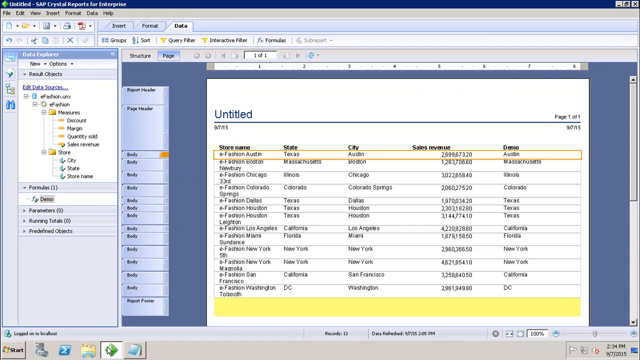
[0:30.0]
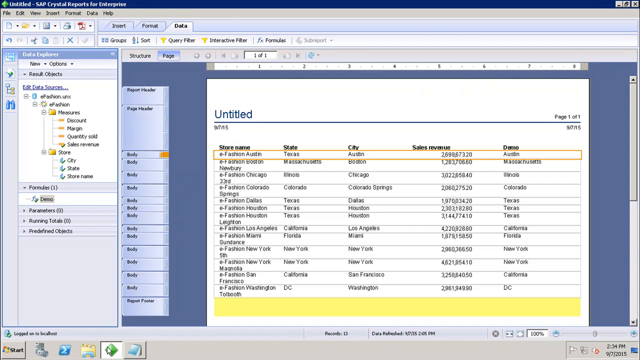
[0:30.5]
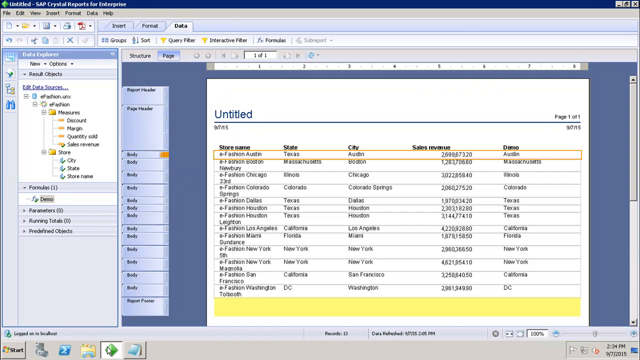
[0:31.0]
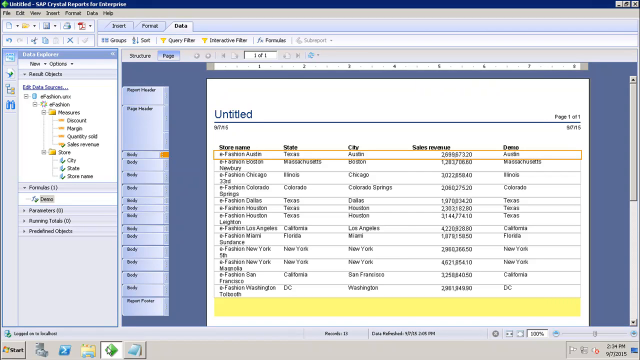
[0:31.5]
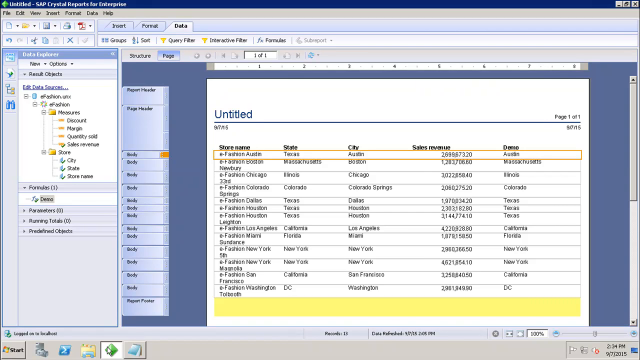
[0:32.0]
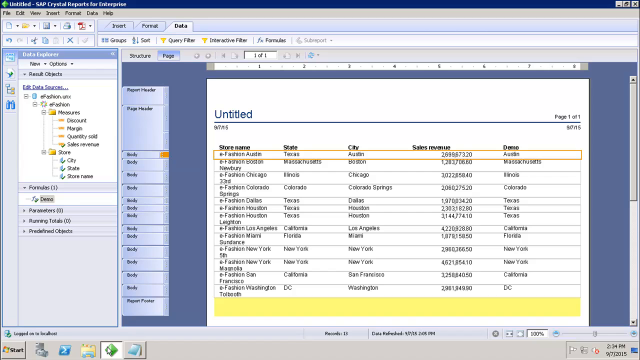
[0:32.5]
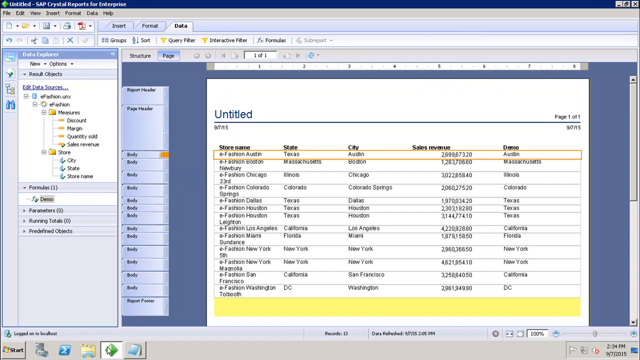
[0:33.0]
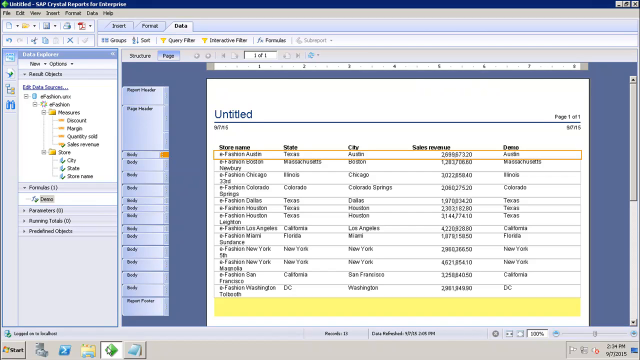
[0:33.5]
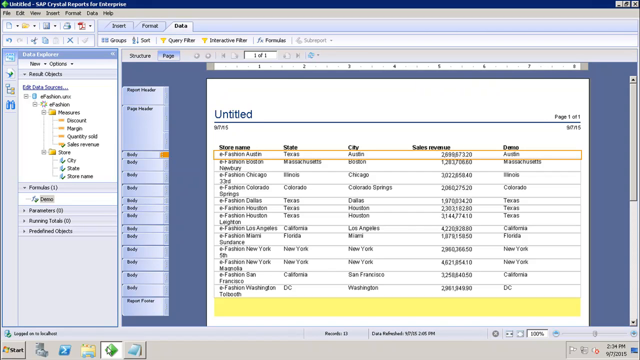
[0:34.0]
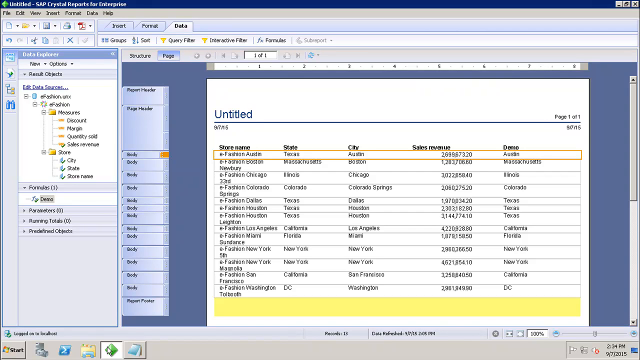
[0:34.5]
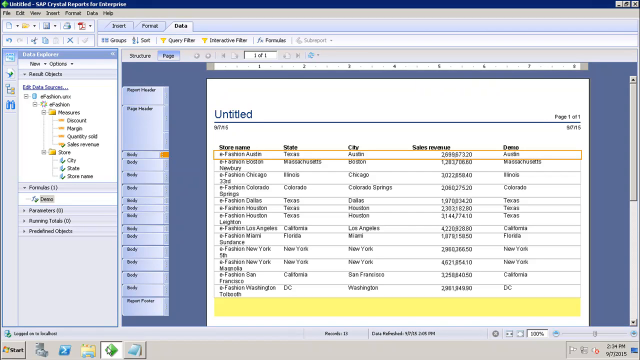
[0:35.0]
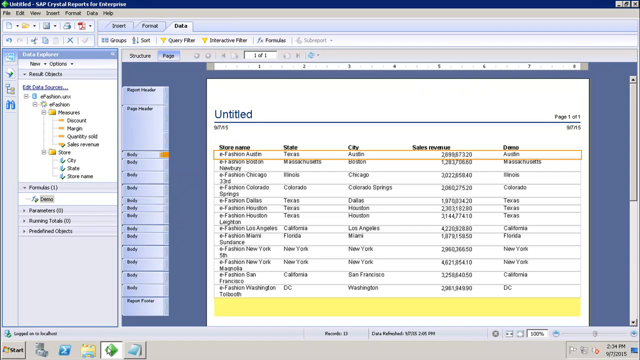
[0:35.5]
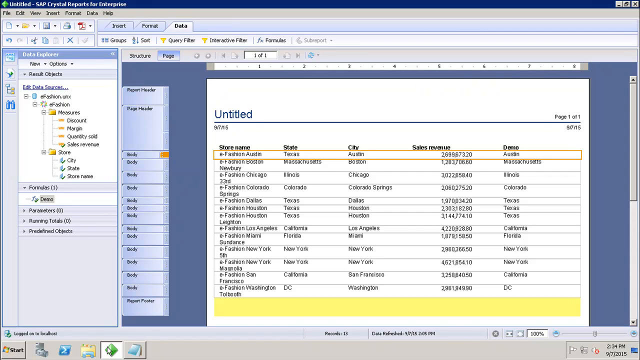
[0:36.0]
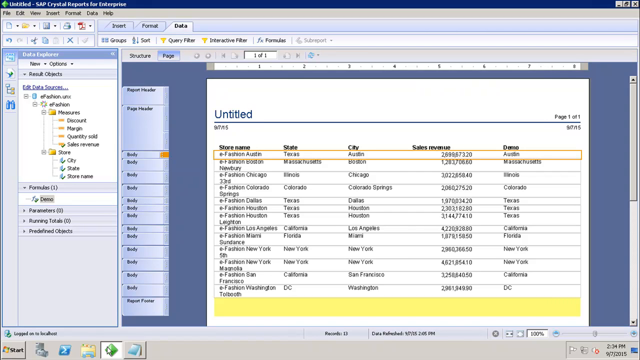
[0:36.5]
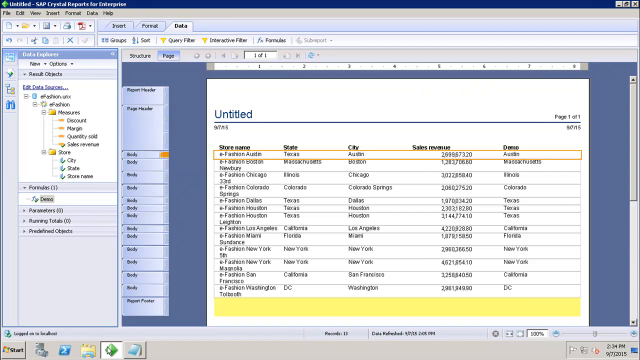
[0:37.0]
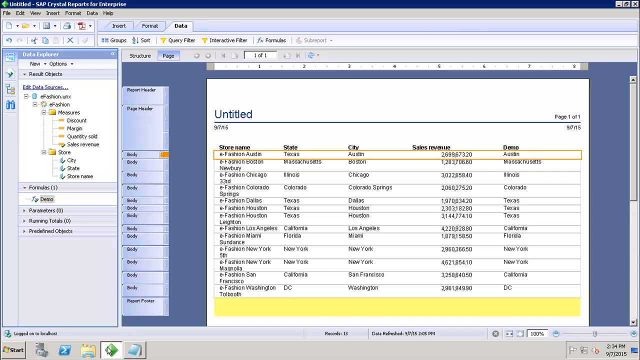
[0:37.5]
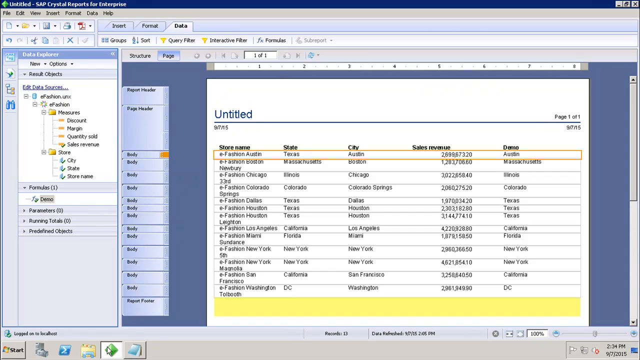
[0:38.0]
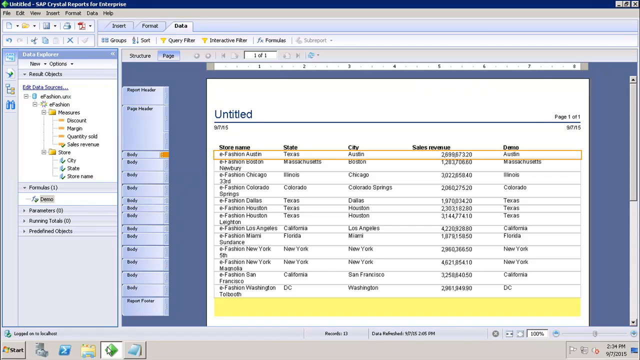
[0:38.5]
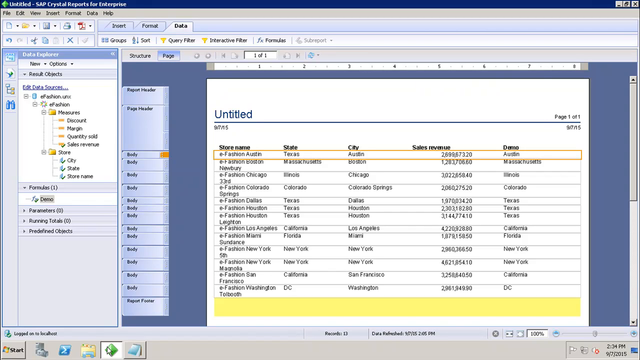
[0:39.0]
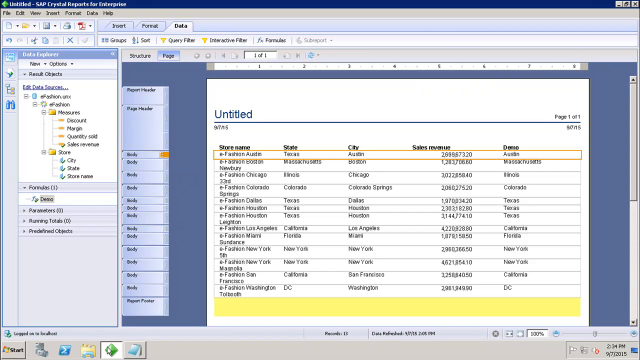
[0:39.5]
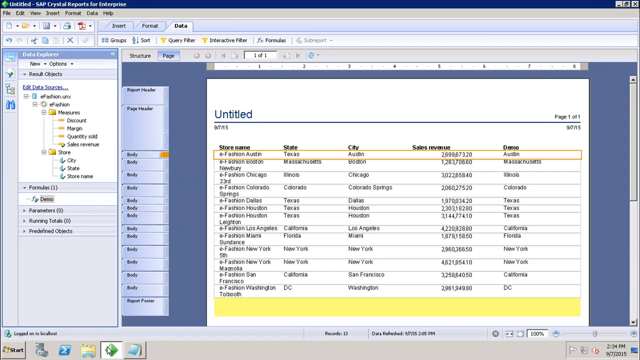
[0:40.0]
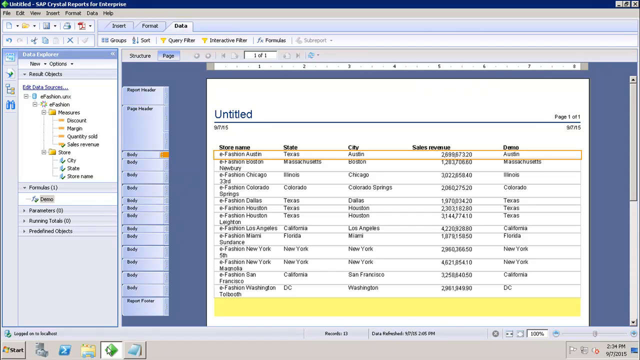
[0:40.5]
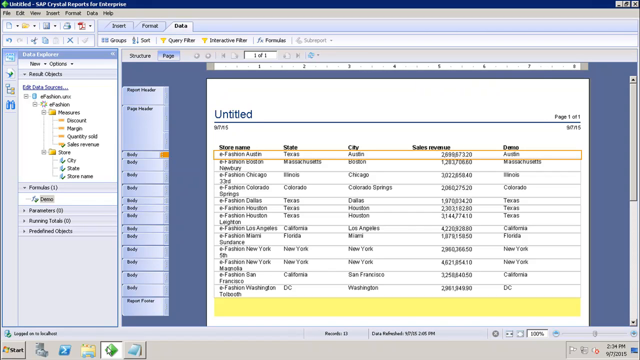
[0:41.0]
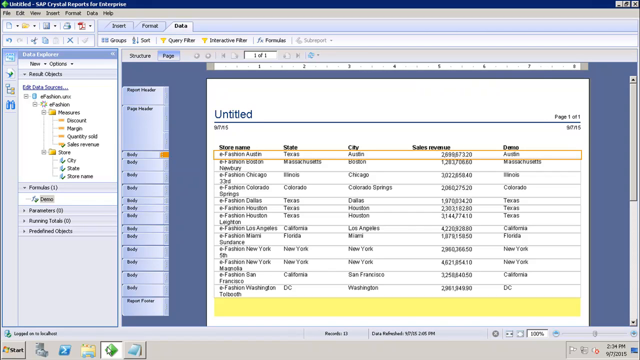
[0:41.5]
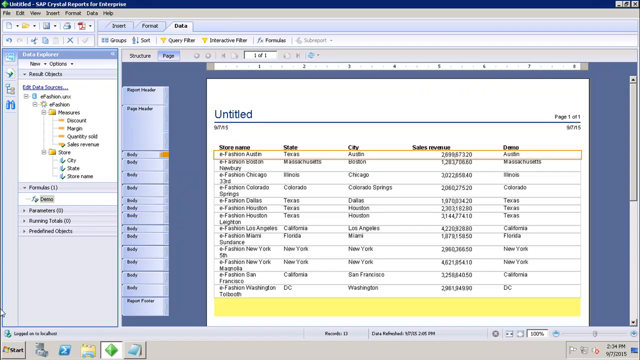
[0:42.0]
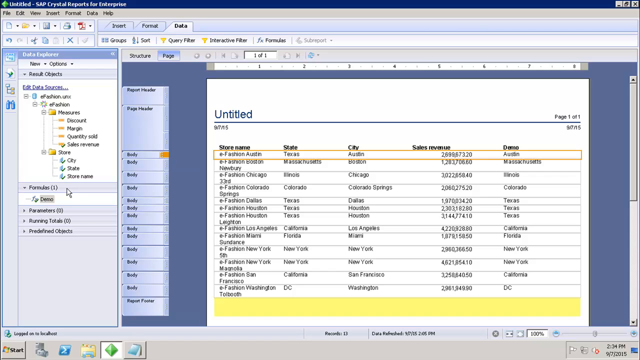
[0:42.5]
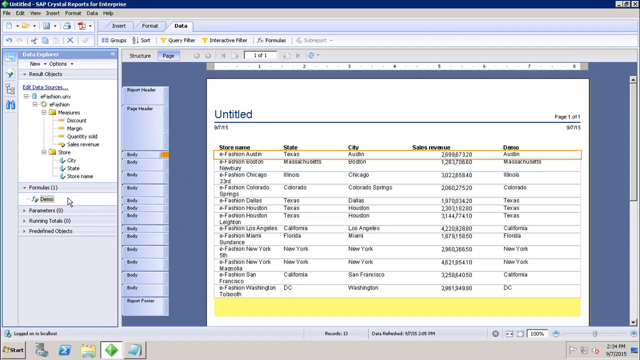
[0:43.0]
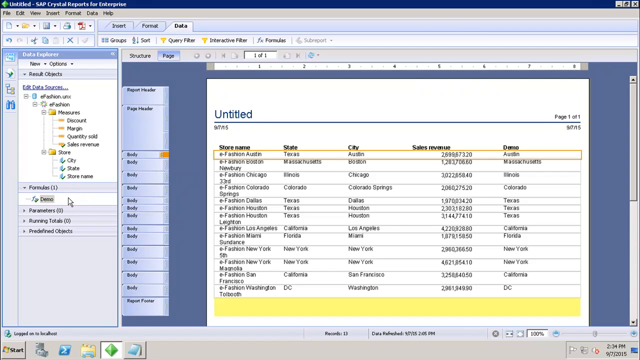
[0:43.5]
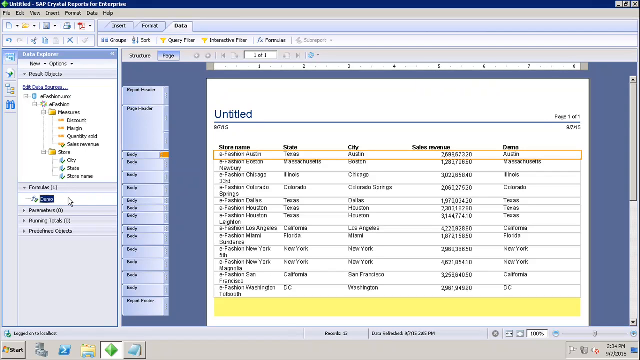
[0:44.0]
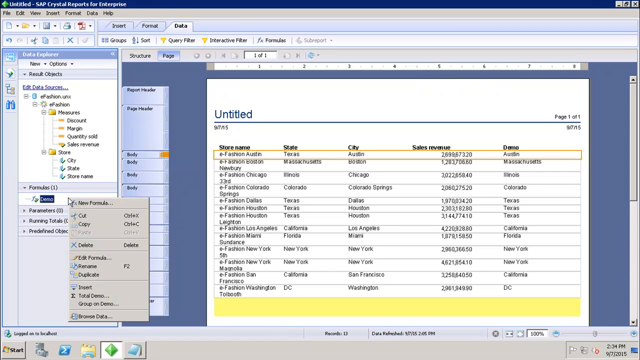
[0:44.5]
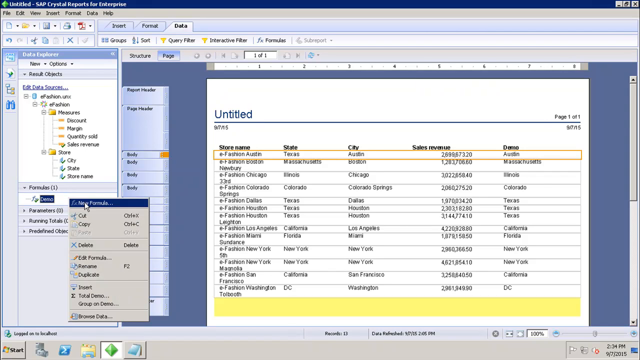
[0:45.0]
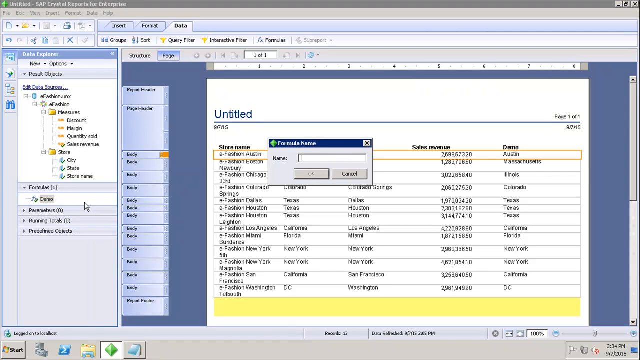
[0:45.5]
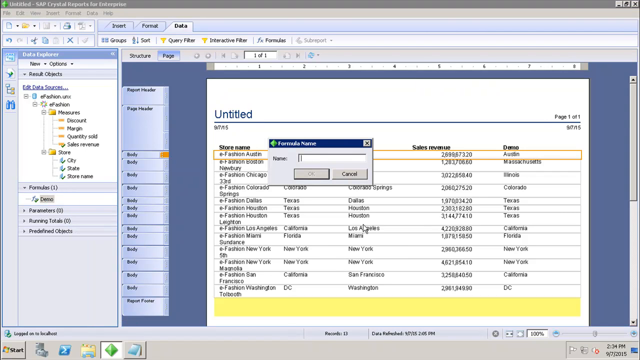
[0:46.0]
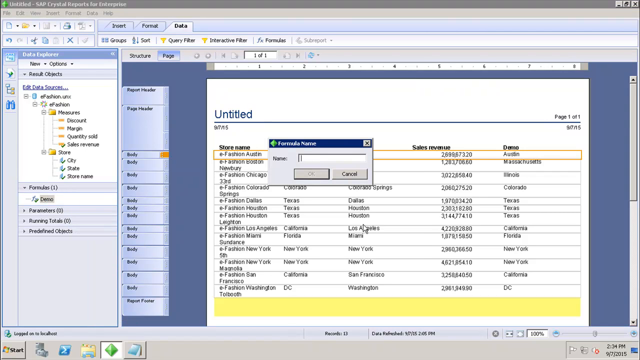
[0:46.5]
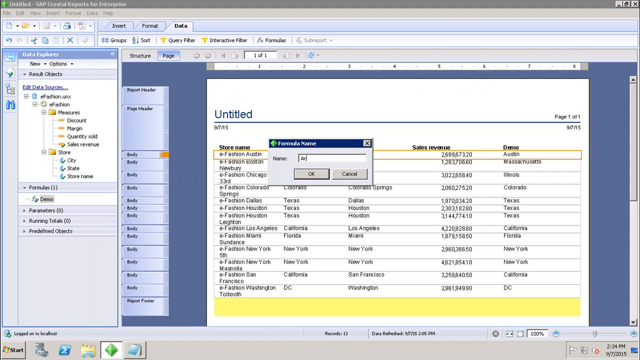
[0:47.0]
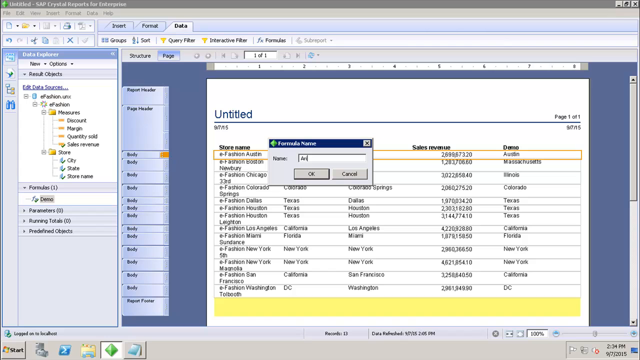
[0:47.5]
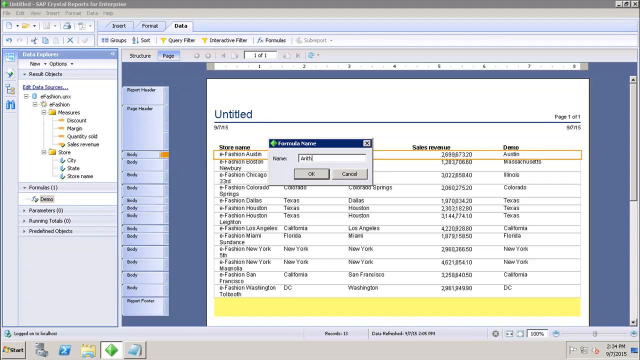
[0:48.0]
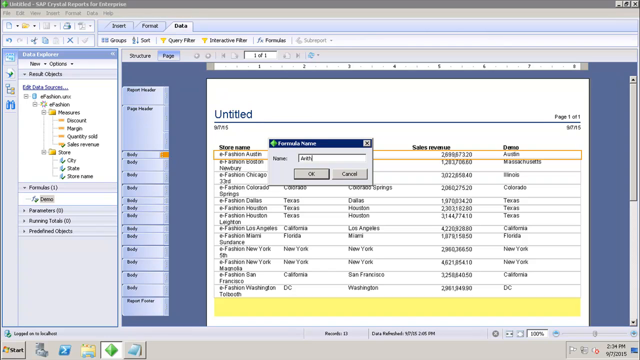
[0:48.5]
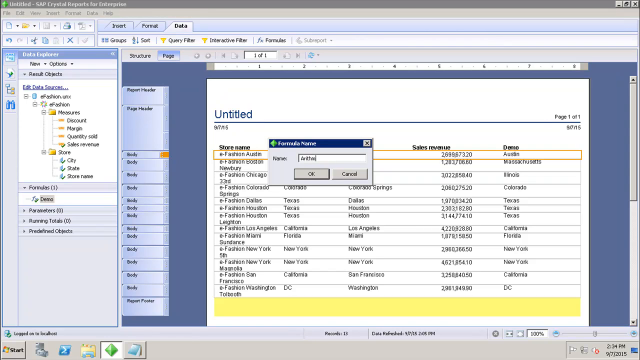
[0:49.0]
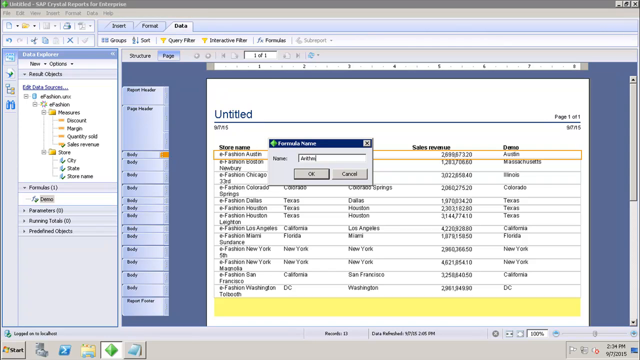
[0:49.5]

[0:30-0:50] The untitled document remains on screen; its type is unclear. The words are blurry even when zoomed in. It is an organized table of sorts, with column titles that appear to be store name, state, city, possibly sales revenue, and a last column too blurry to read. The text "e-fashion" appears. The store name area shows New York, Miami, San Francisco, Washington and Chicago. The state column shows Texas, Massachusetts, Illinois and Colorado, and the city column shows Austin, Boston, Chicago, Colorado Springs, Dallas, Houston, Los Angeles, Miami, New York, San Francisco and Washington. The sales revenue numbers blur together and cannot be read. The first entry has a directional diagram around it.